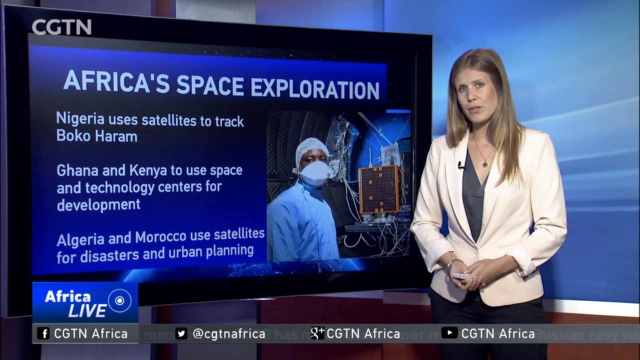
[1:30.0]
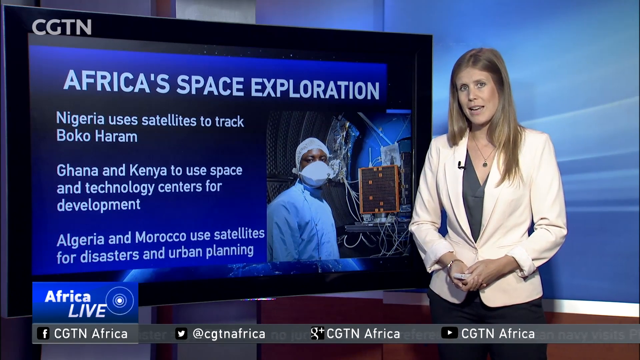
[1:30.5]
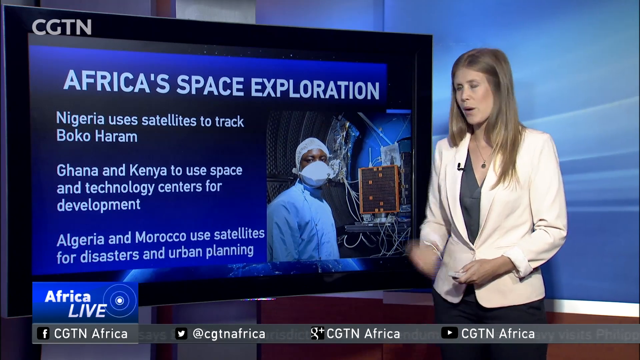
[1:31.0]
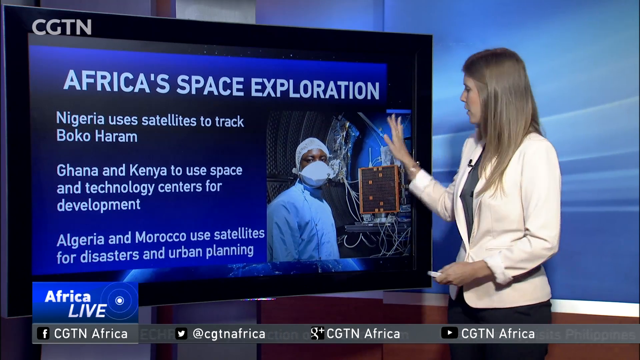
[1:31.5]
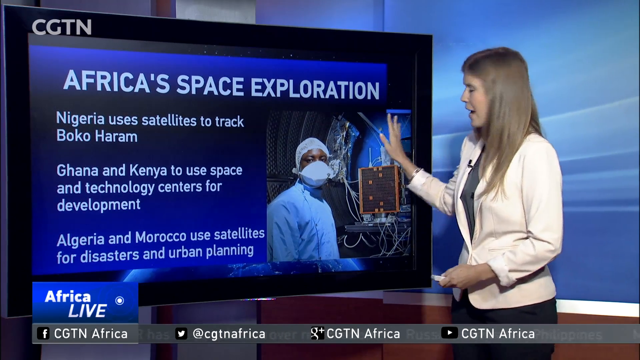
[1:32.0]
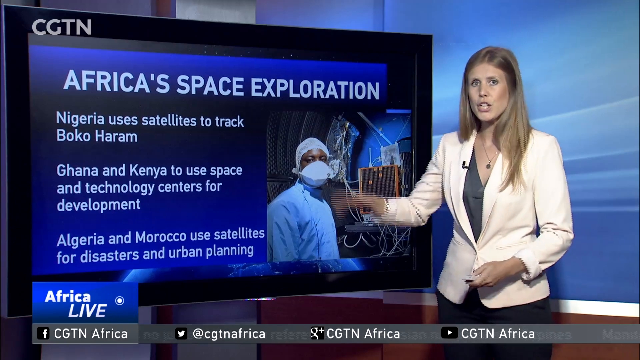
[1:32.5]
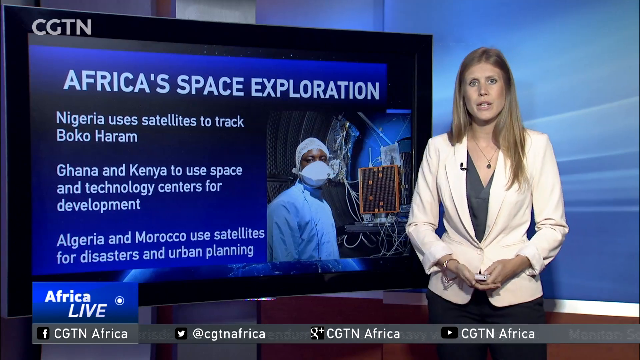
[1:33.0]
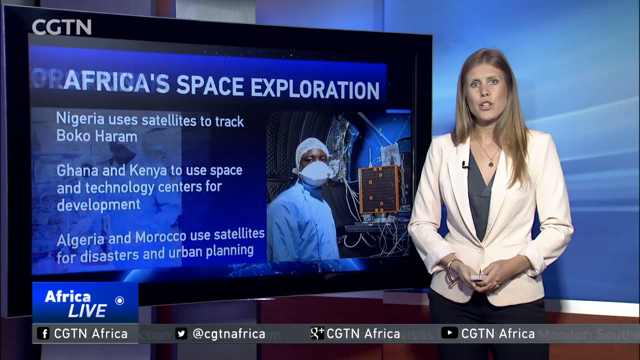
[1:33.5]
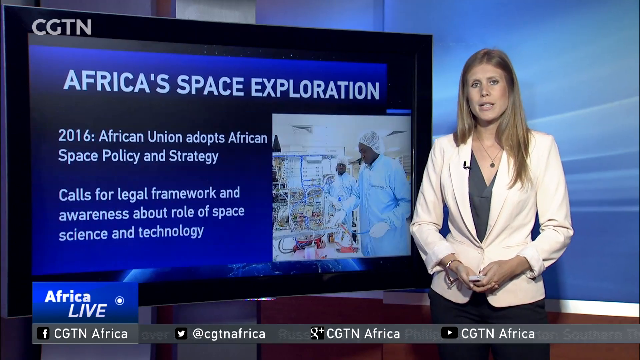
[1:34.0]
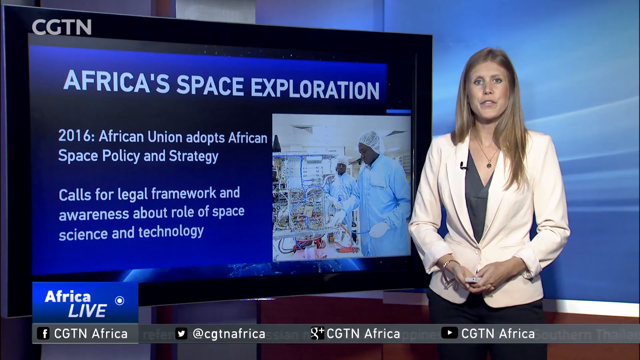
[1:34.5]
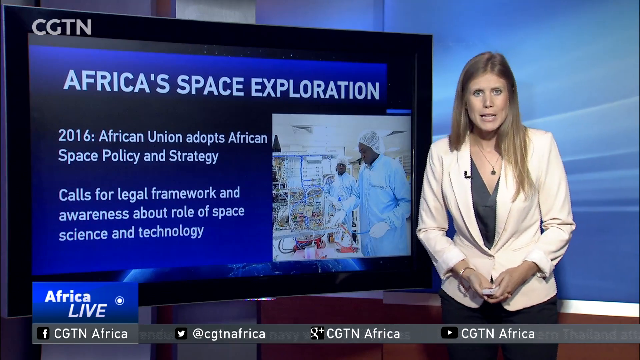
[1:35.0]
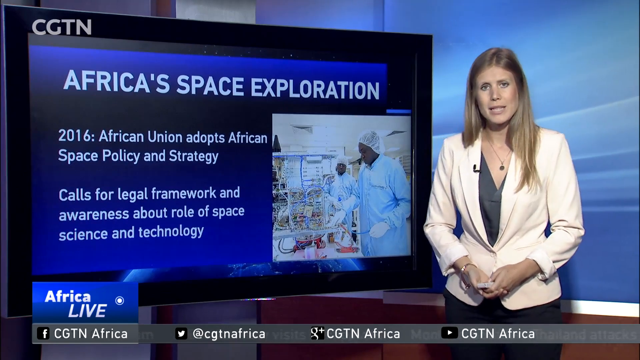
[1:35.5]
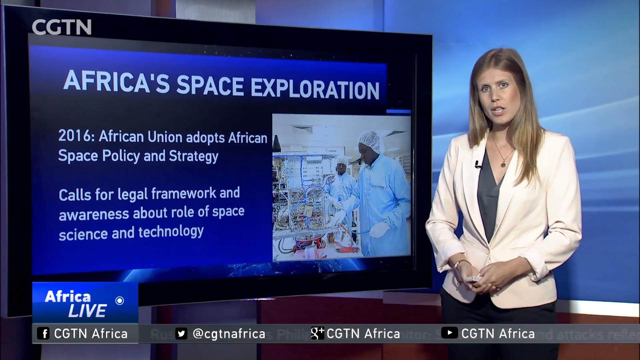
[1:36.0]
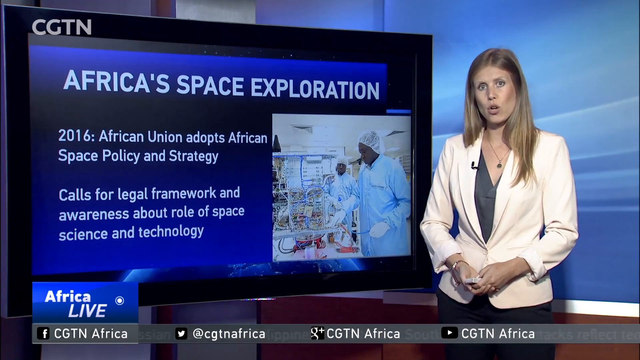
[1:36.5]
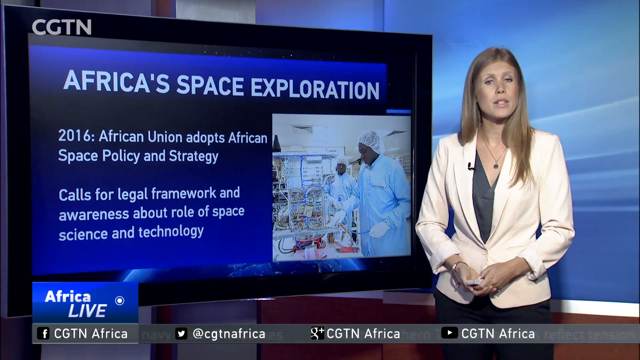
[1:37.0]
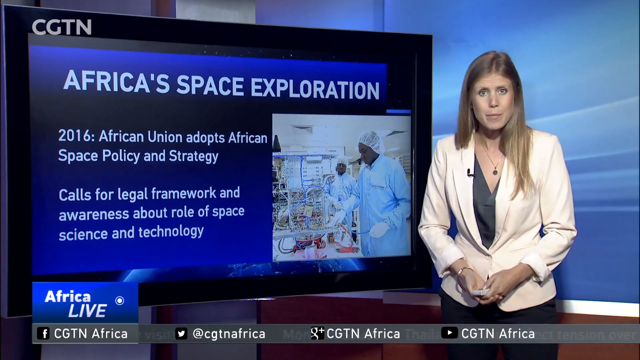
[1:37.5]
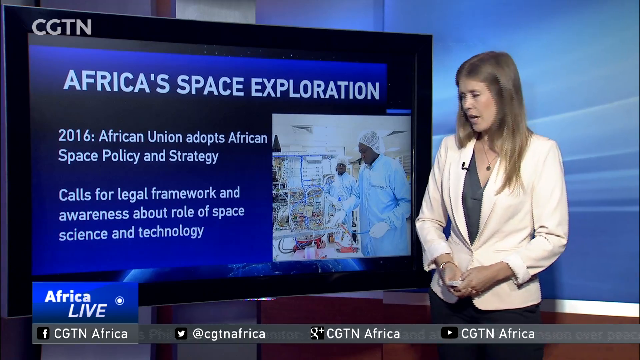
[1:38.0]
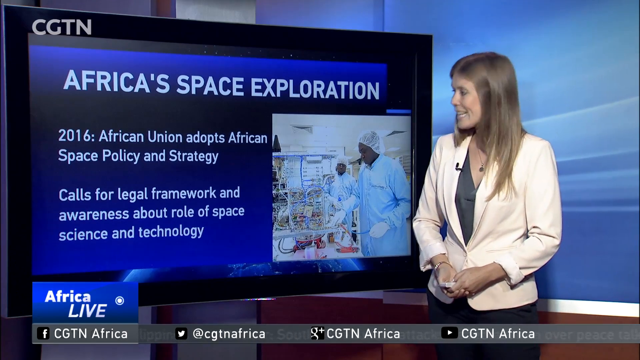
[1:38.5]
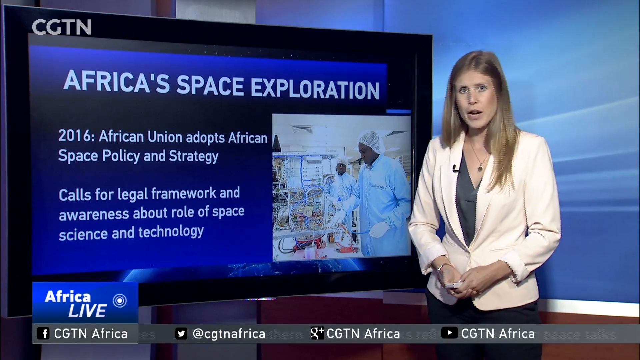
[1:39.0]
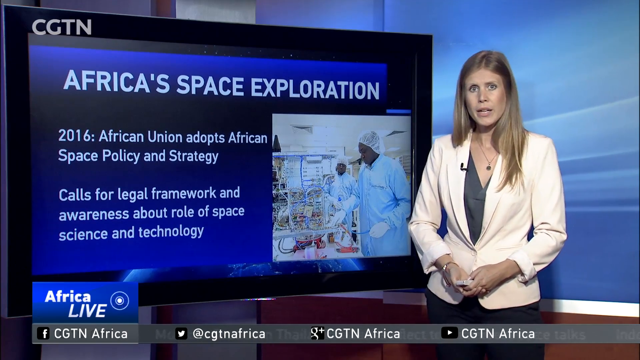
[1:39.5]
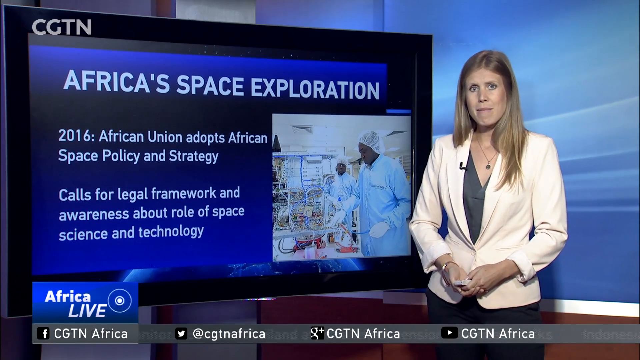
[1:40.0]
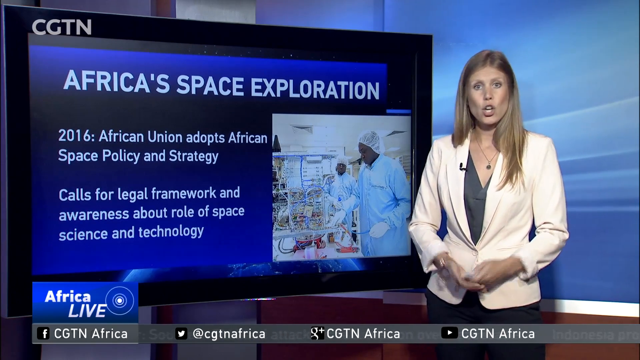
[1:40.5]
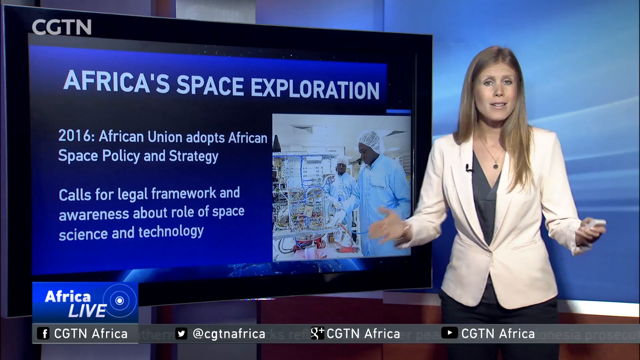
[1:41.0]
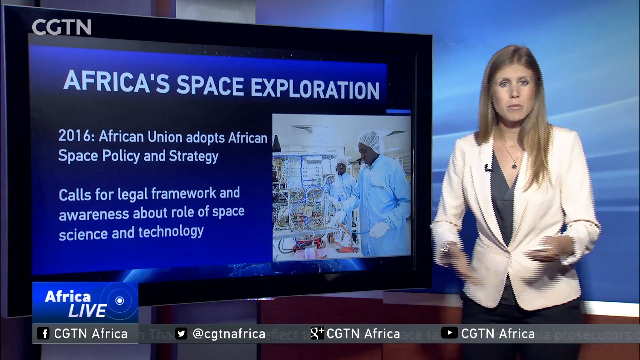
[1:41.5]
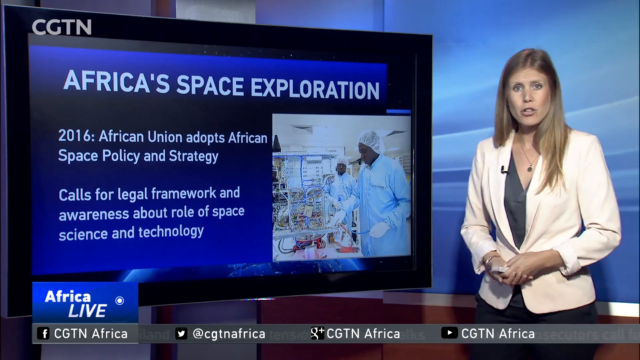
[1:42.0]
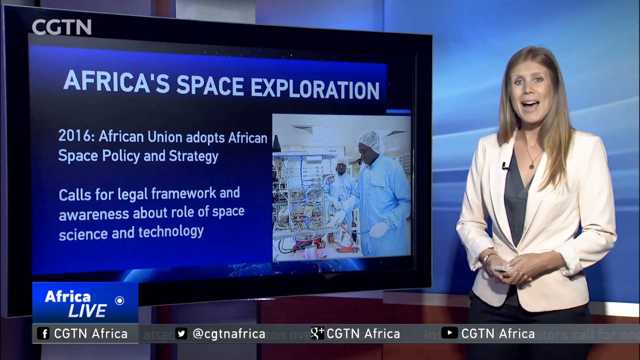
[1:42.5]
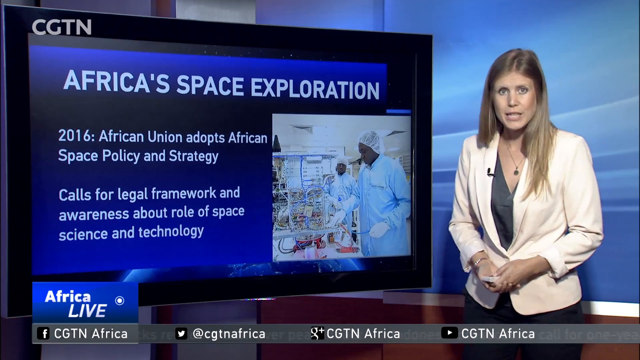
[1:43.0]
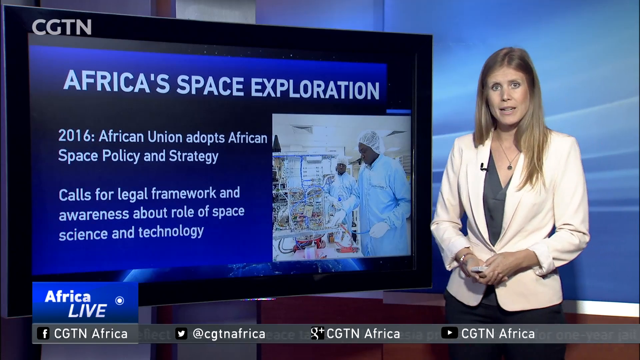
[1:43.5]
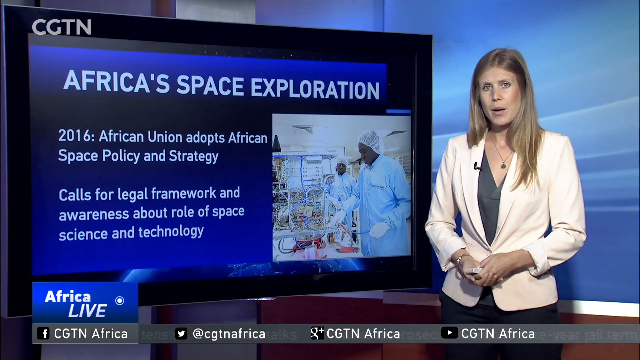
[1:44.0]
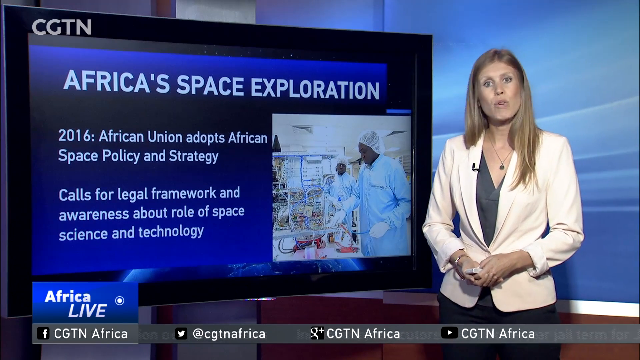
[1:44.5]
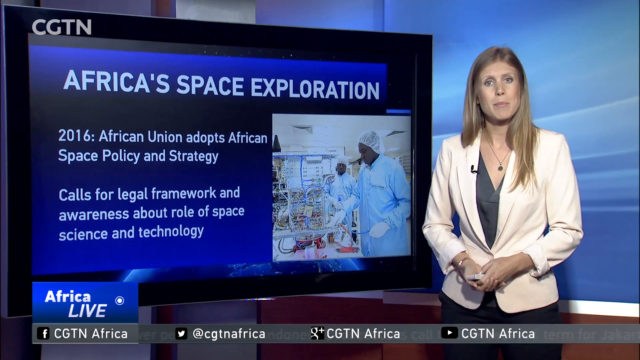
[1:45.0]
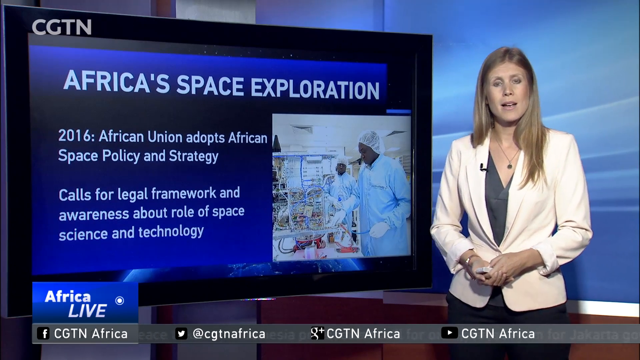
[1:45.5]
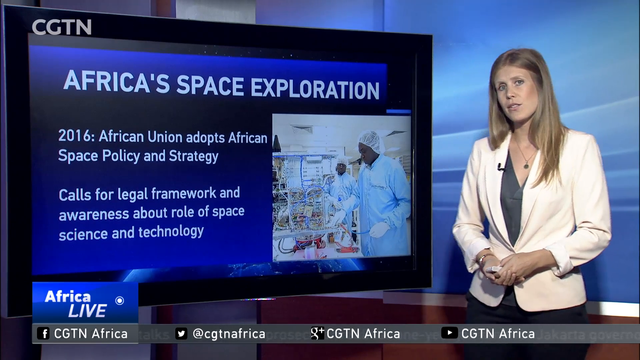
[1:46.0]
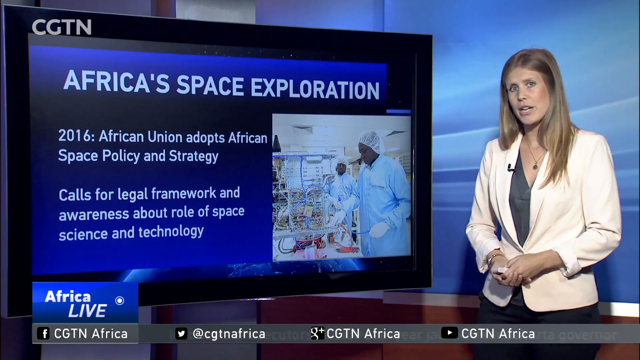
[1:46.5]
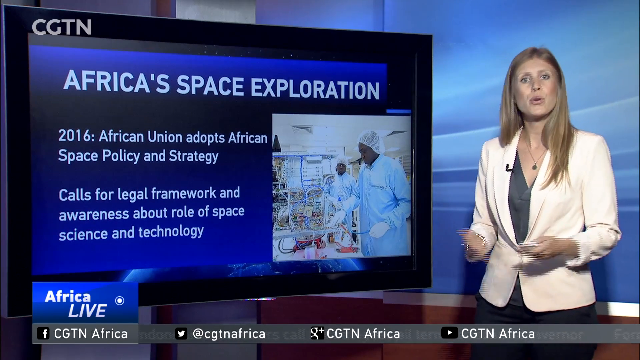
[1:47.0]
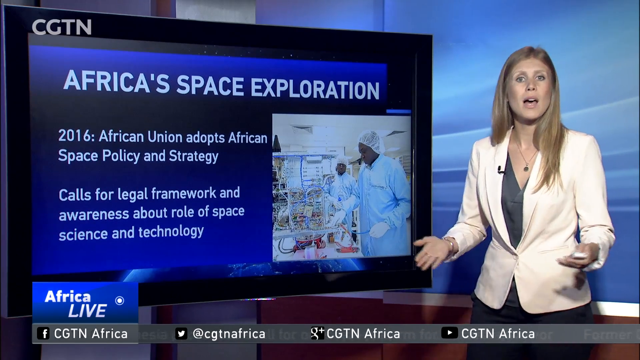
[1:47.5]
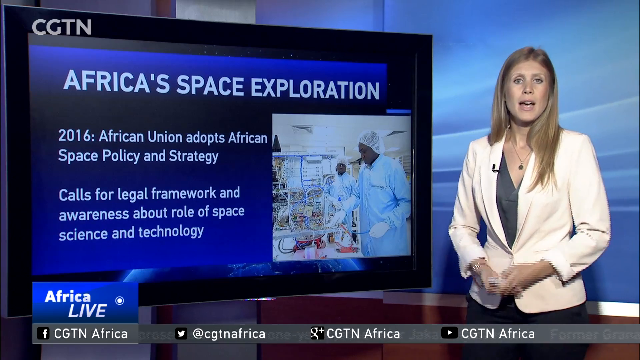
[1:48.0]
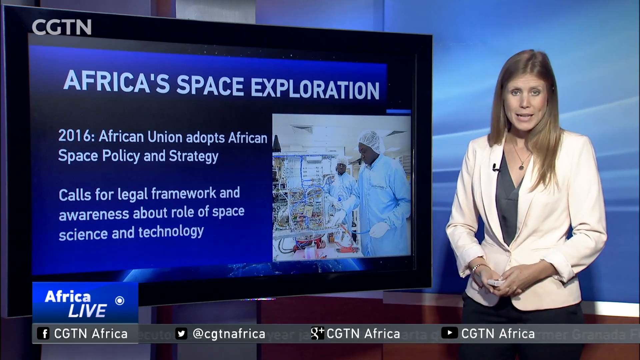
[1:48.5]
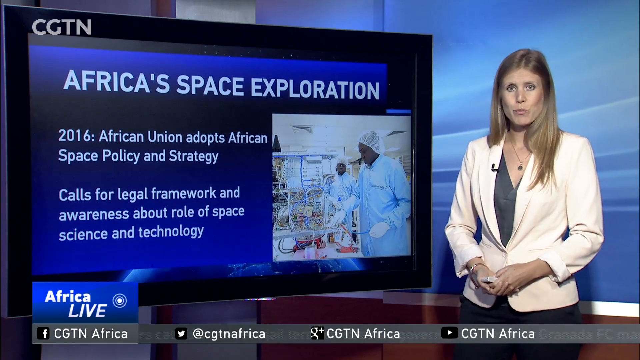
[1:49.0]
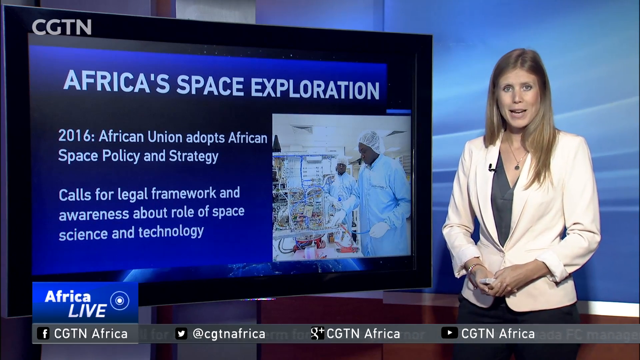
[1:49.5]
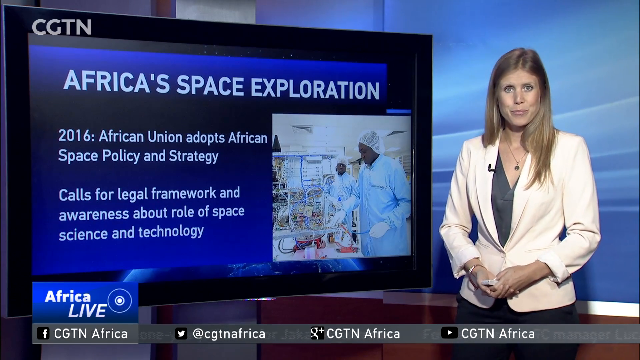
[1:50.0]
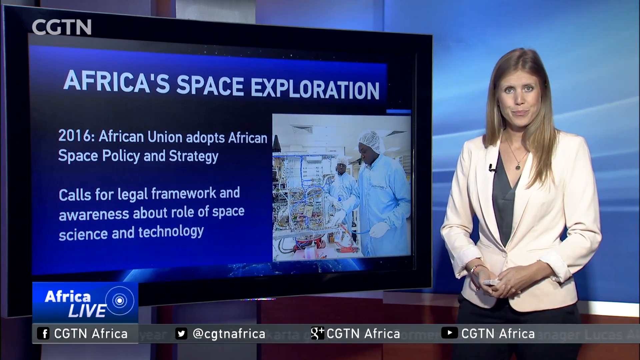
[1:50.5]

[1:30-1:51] The CGTN-TV broadcast on Africa's space exploration continues, highlighting individual countries' recent accomplishments and what they use their space programs for, including surveillance and exploration. A woman with light hair and a tan jacket in a news station continues her presentation, with a television on the right side of the screen going through the countries' accomplishments. The screen shows that in 2016 the African Union adopted an African space policy and strategy, which calls for a legal framework and awareness about the role of space science and technology.